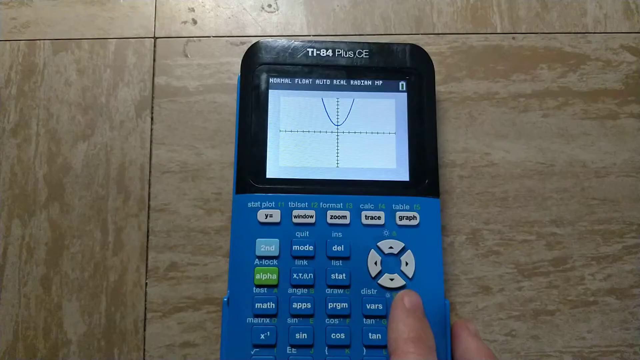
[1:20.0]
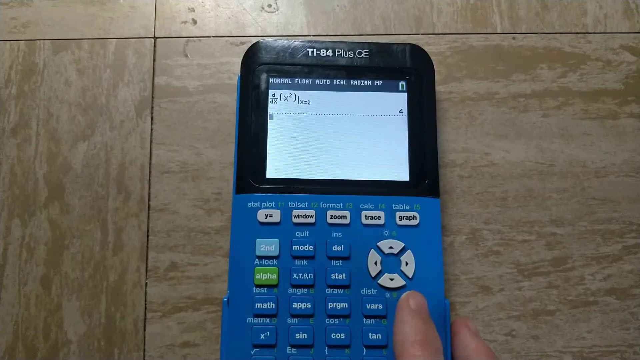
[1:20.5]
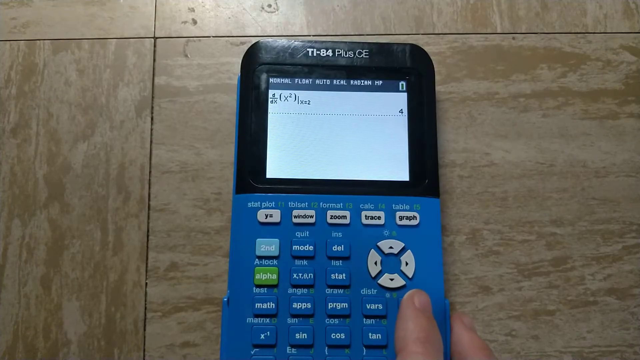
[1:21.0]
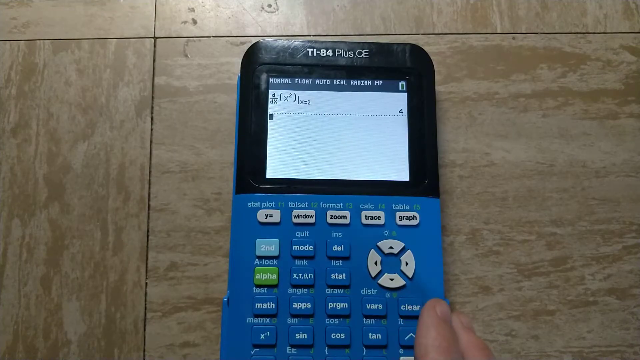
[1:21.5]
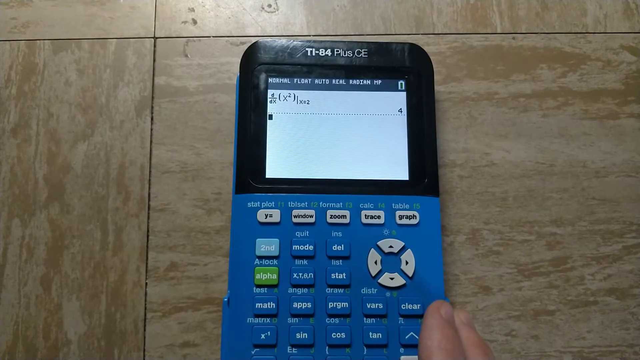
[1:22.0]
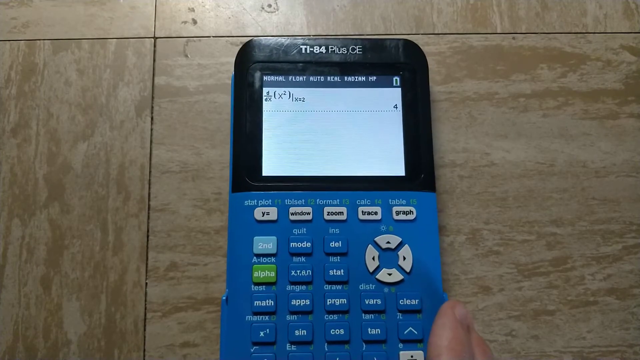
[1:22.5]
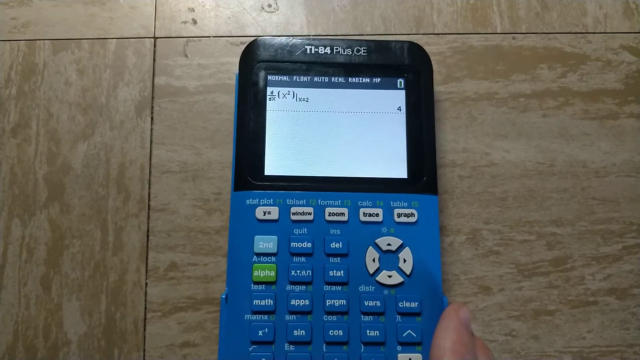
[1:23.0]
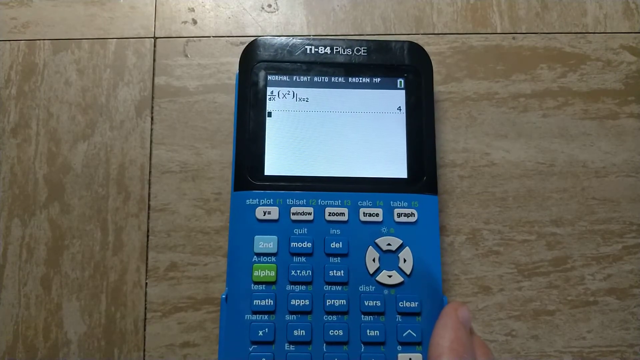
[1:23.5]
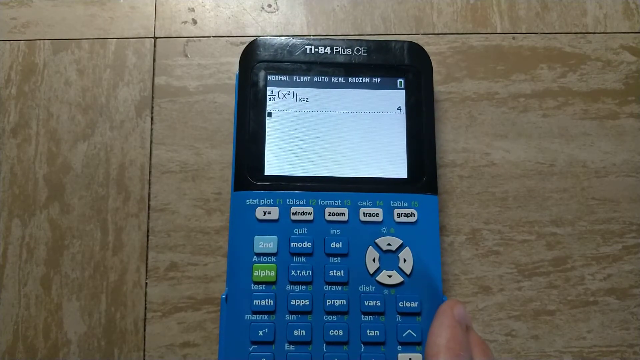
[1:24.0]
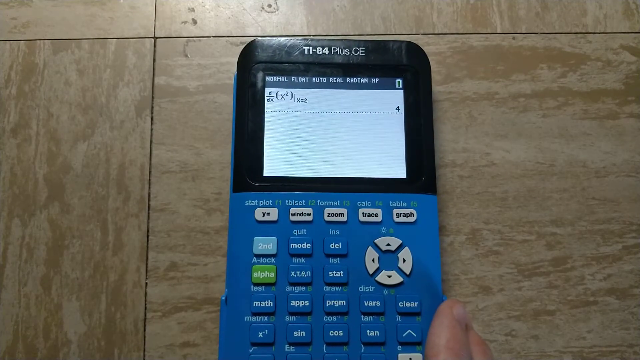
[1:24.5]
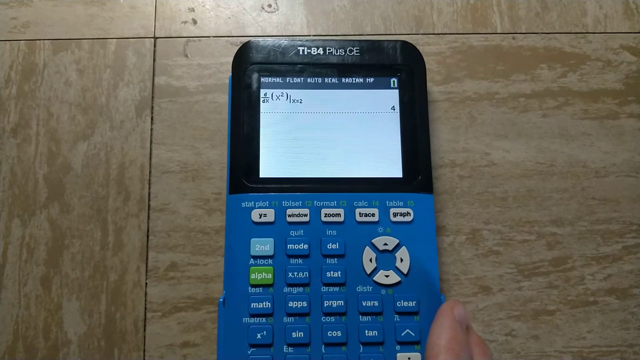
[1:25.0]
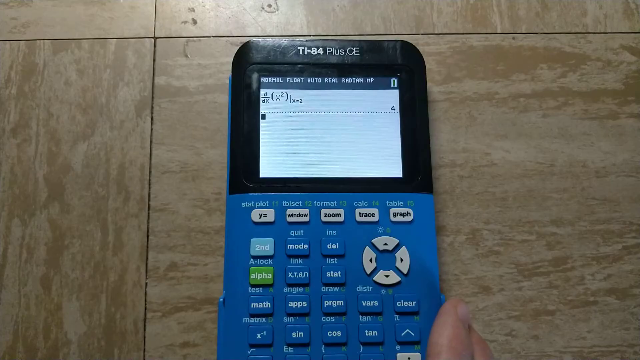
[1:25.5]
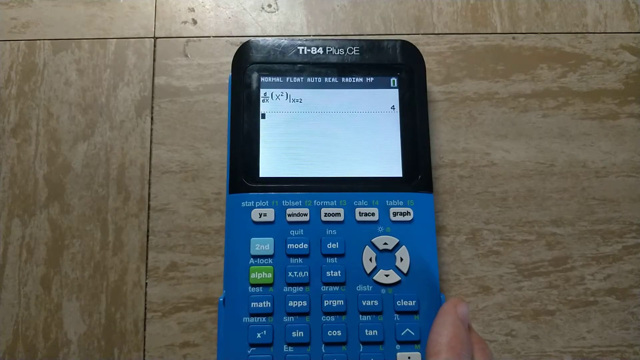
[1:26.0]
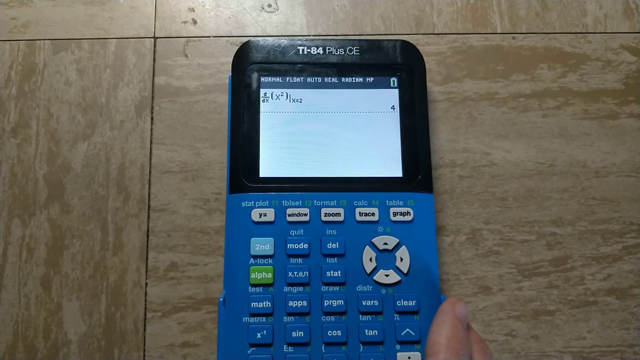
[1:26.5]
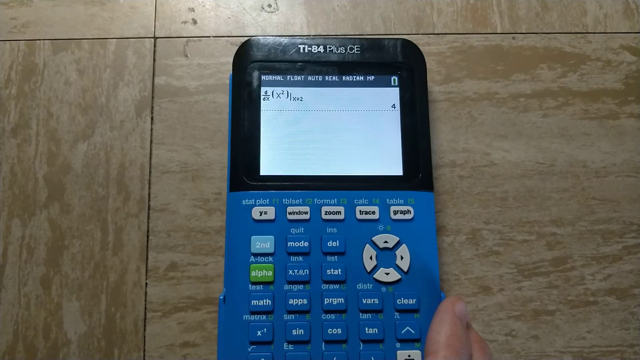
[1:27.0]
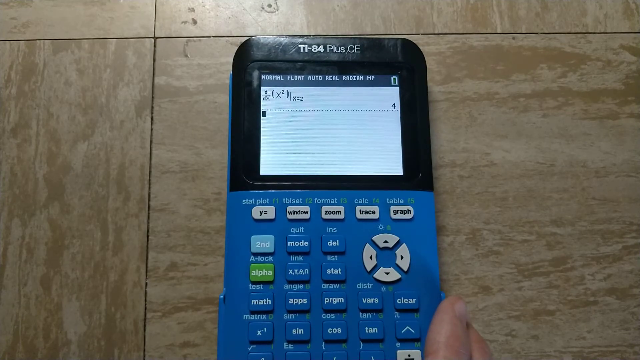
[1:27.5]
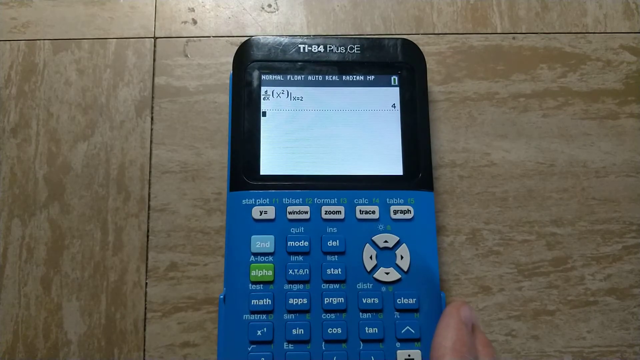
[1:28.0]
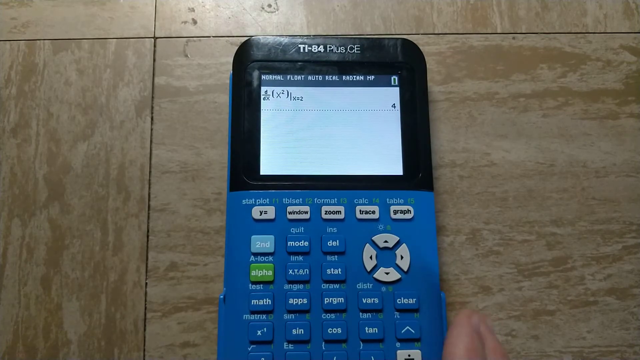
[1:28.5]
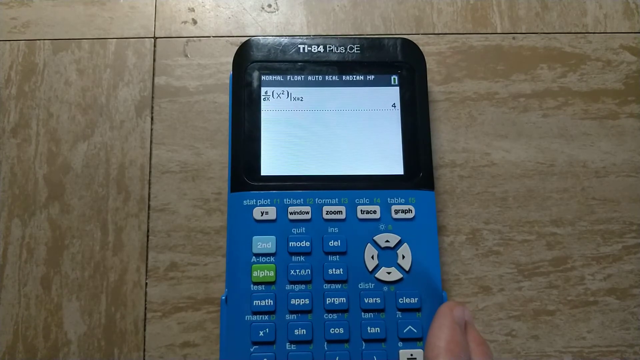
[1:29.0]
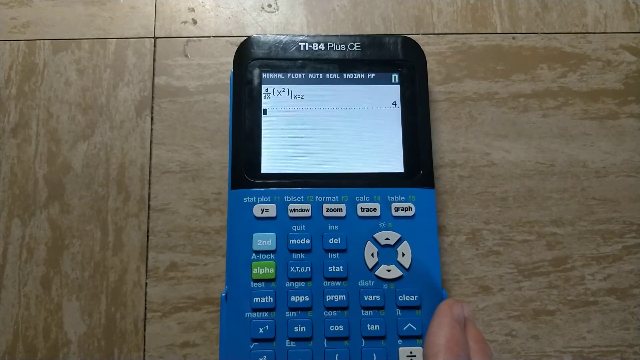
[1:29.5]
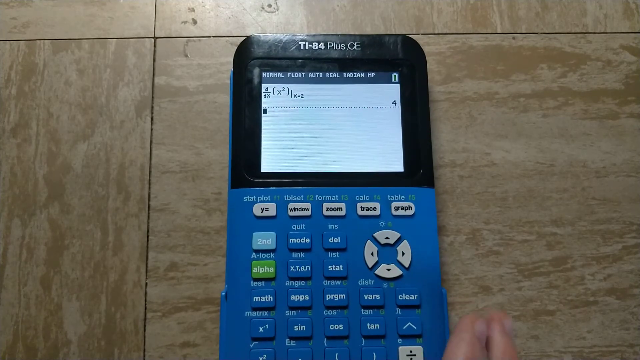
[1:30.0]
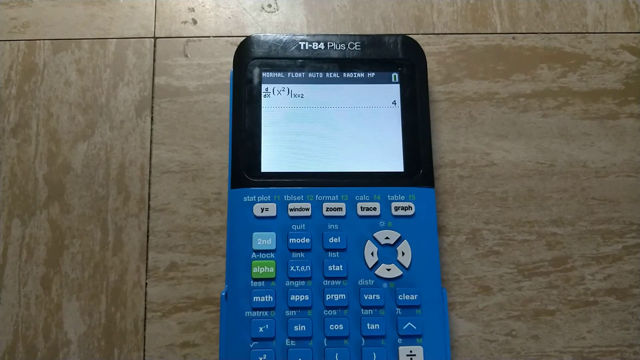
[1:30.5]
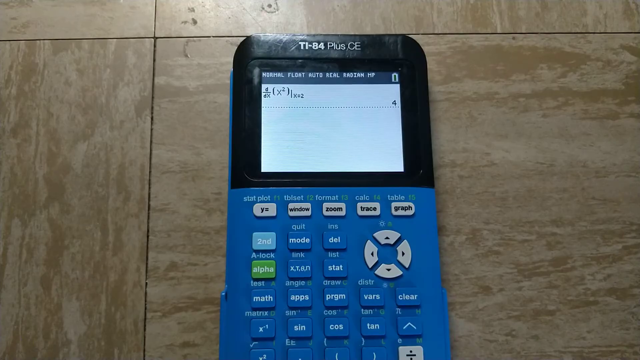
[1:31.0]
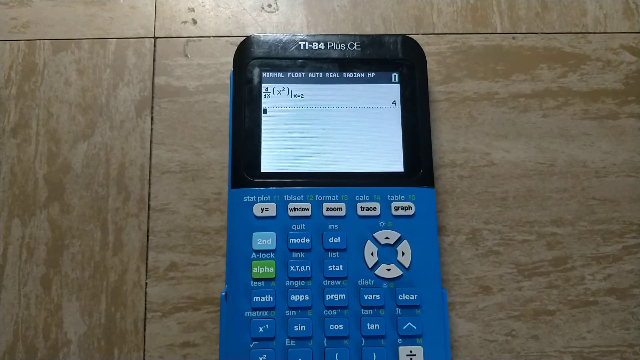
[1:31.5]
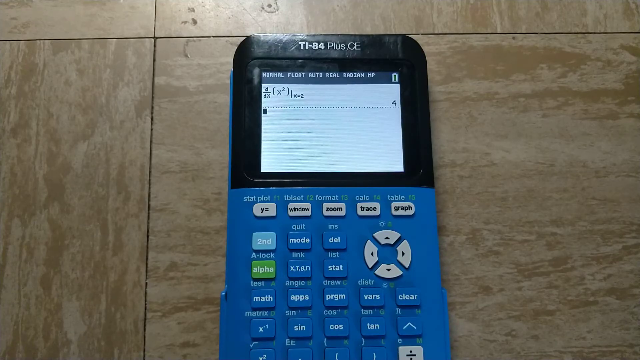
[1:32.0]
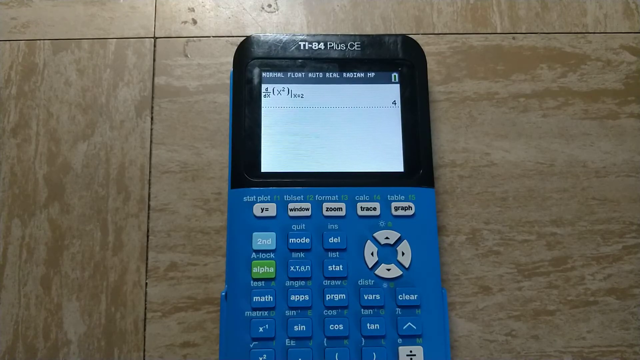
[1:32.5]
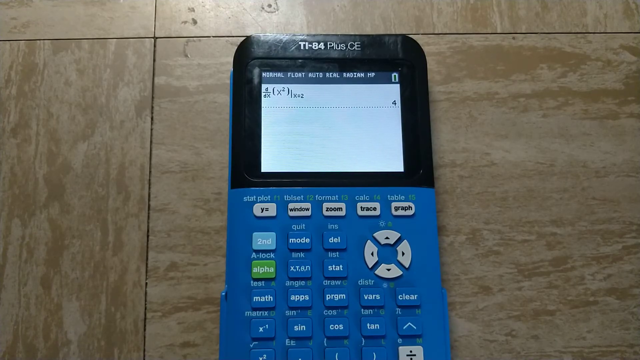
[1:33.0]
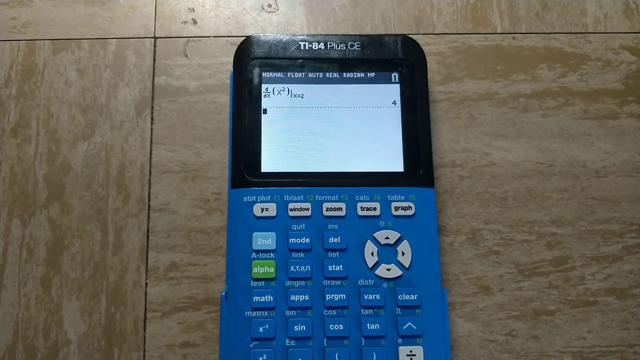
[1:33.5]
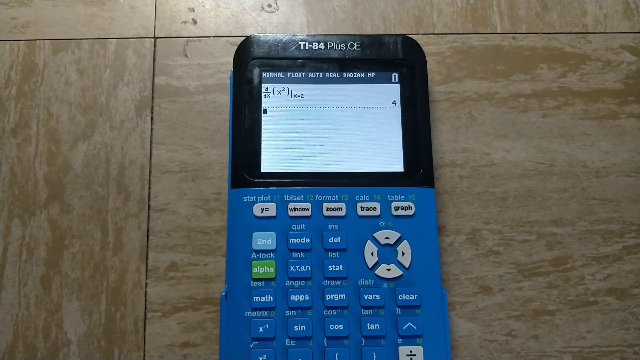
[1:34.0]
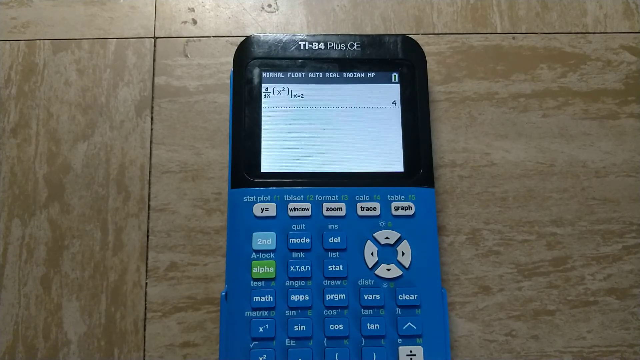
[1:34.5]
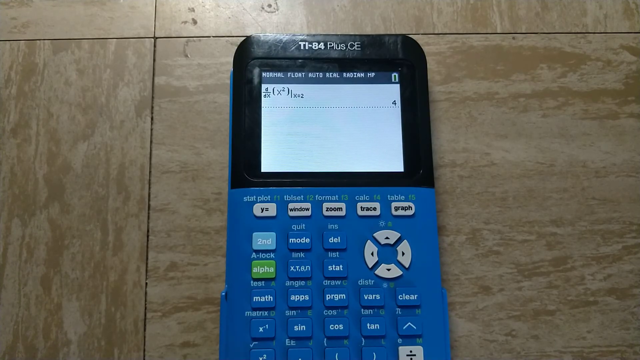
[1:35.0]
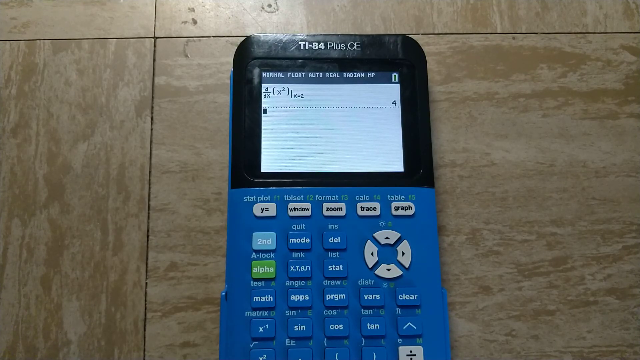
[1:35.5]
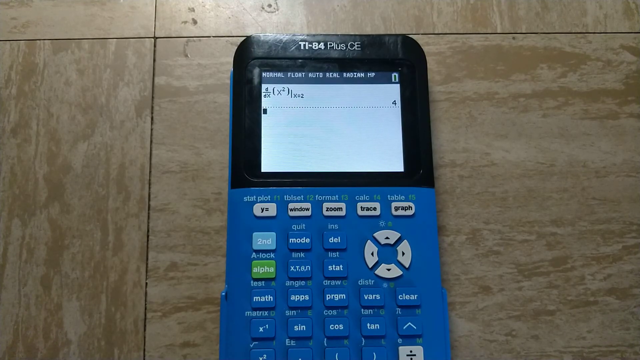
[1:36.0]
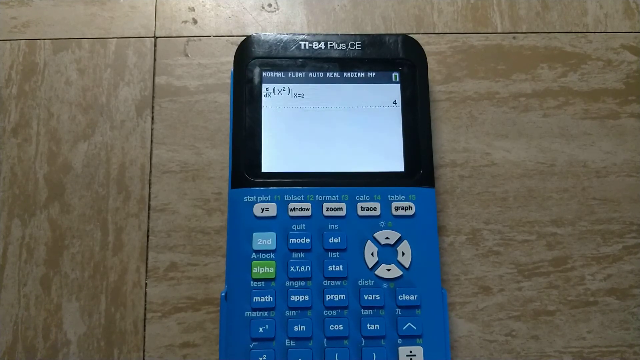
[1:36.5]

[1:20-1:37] The calculator is still shown, looking the same as before, with a hand busy pressing it. The person seems to be doing work and trying to make some calculation: numbers appear written on the calculator when the hand enters letters. Many names are written across the buttons of the calculator, and names are listed next to letters; it looks like a smartphone. The calculator is blue and black, with gray patterns and a green one. The noticeable text, including numbers, written on top of the calculator reads "TI/84 plus CE".